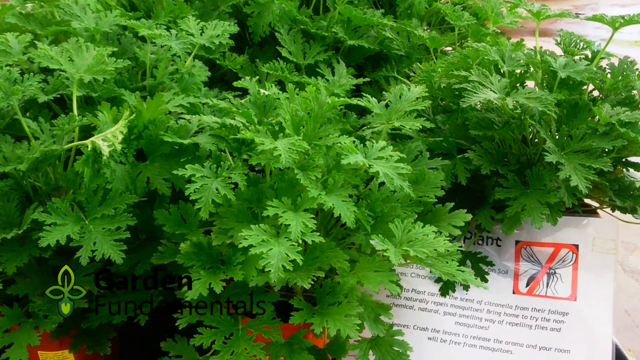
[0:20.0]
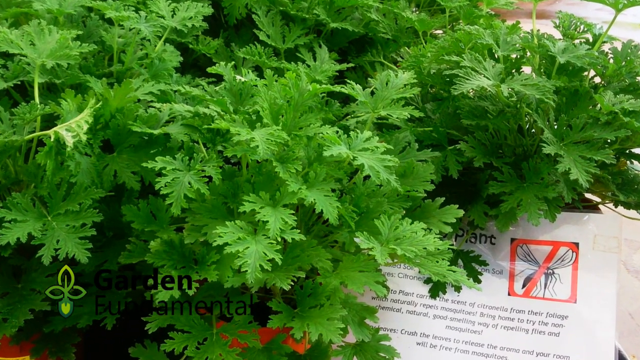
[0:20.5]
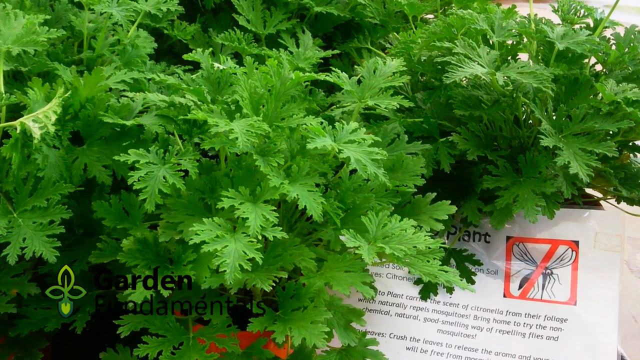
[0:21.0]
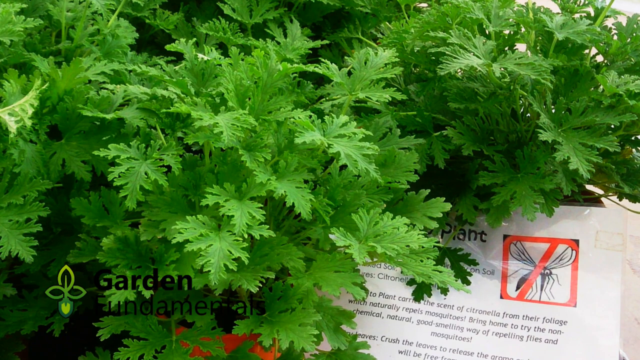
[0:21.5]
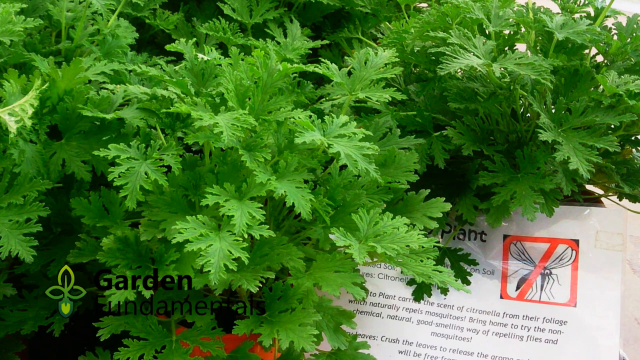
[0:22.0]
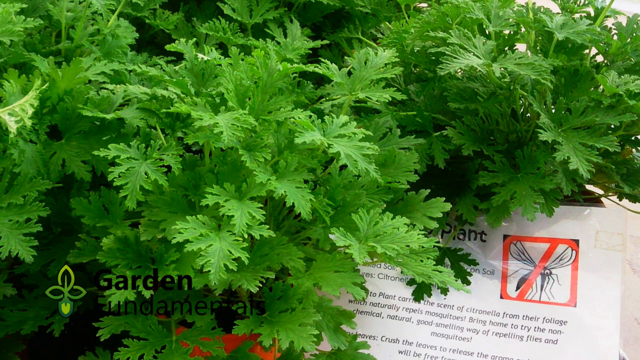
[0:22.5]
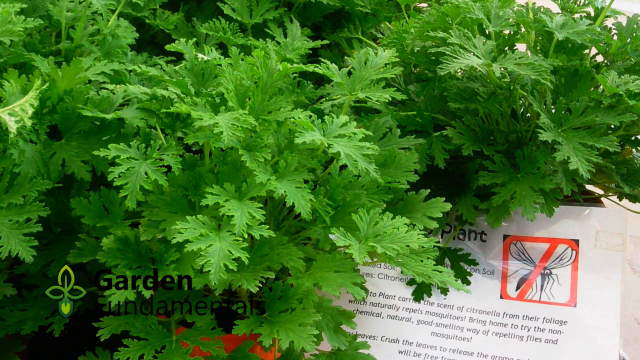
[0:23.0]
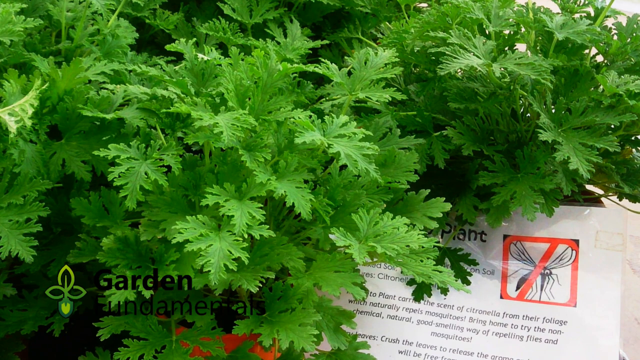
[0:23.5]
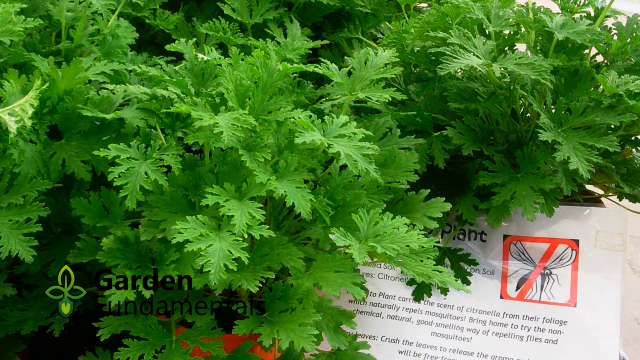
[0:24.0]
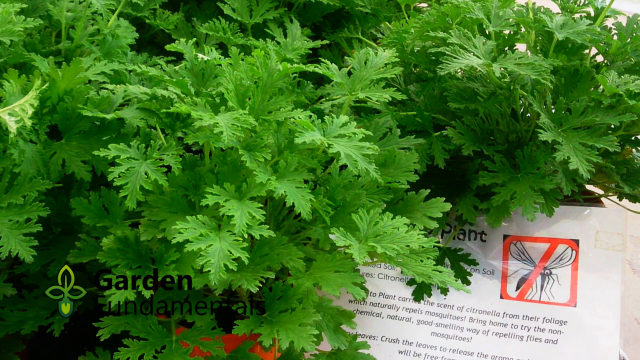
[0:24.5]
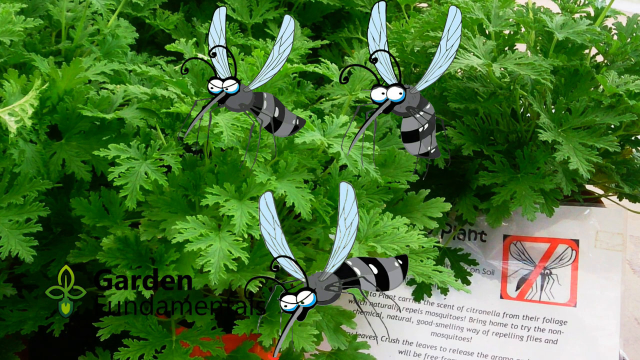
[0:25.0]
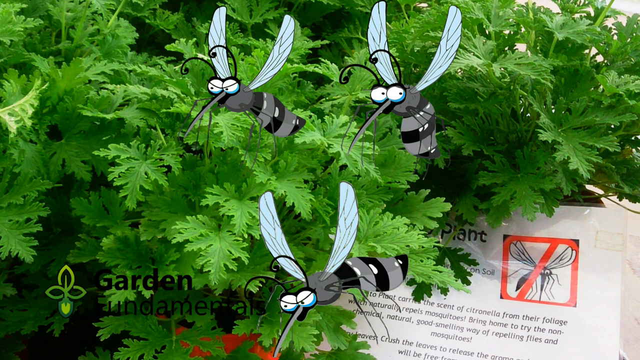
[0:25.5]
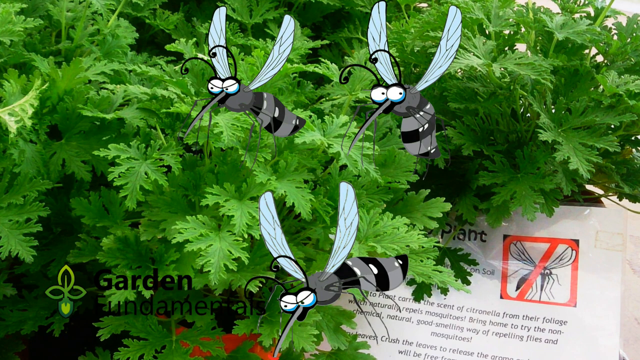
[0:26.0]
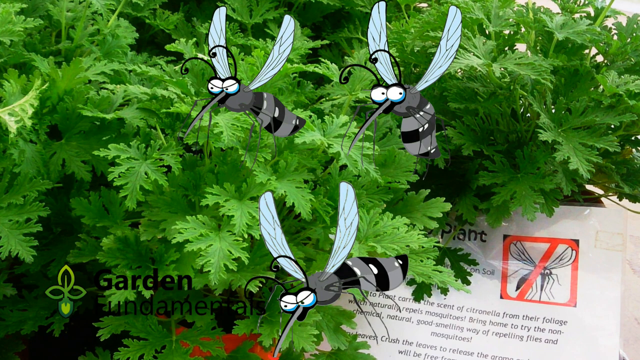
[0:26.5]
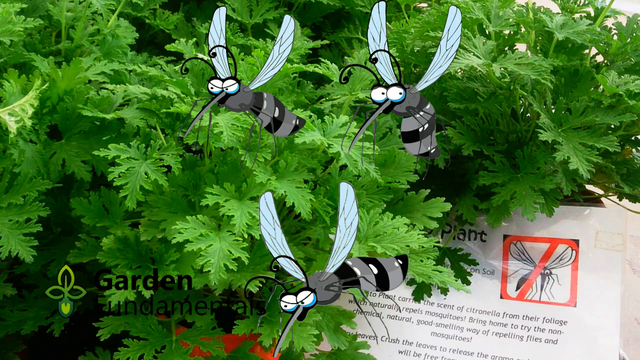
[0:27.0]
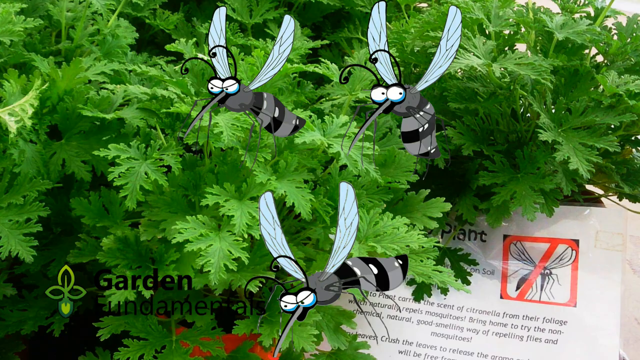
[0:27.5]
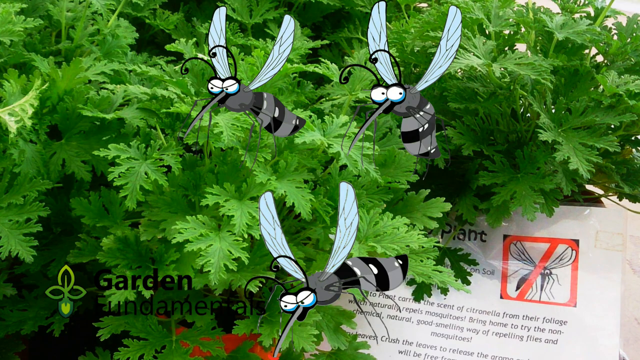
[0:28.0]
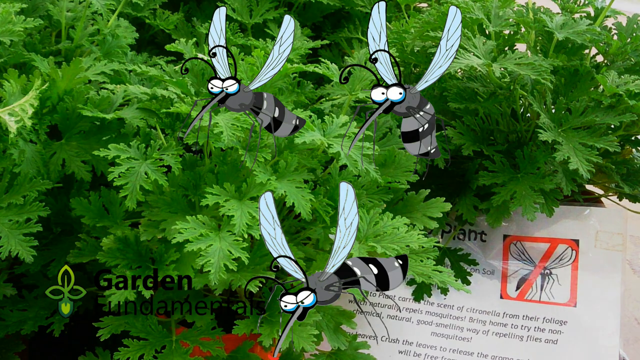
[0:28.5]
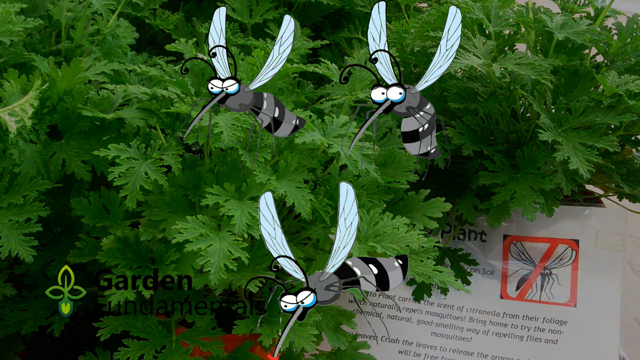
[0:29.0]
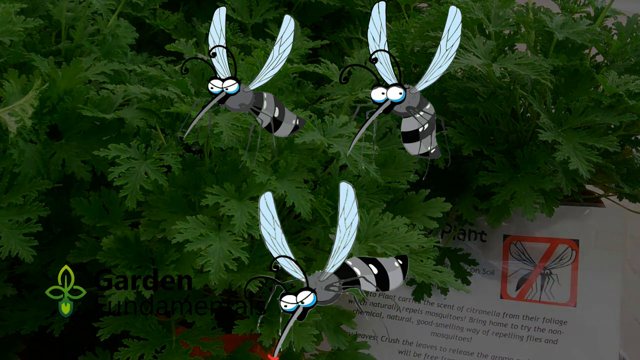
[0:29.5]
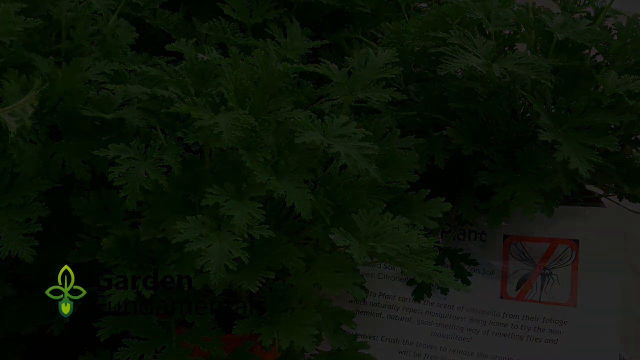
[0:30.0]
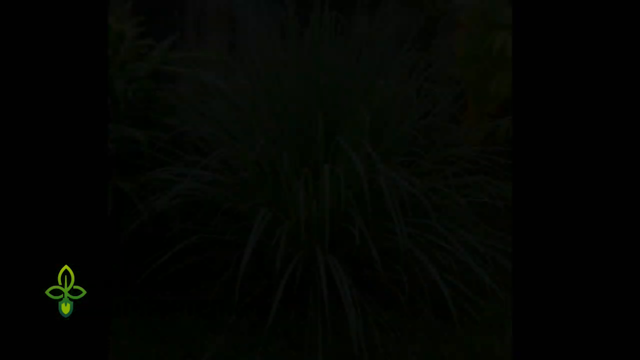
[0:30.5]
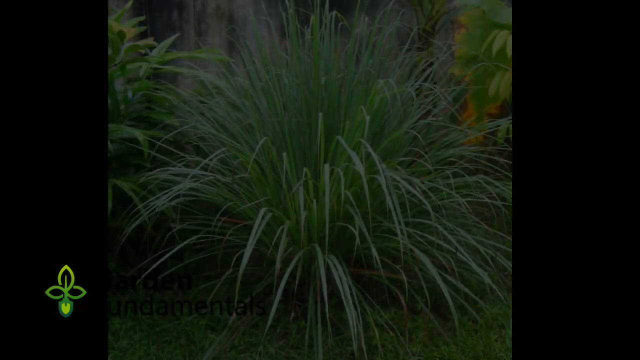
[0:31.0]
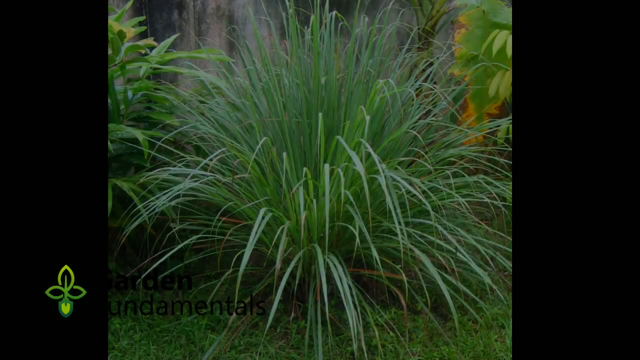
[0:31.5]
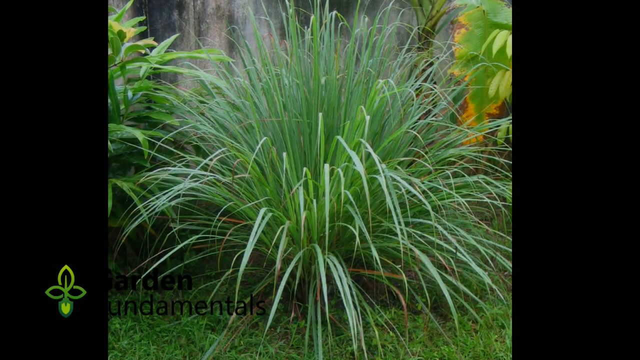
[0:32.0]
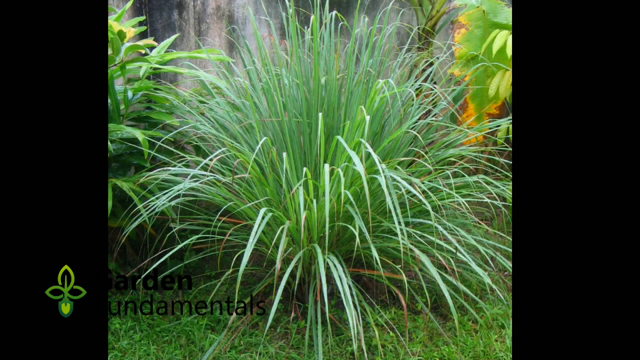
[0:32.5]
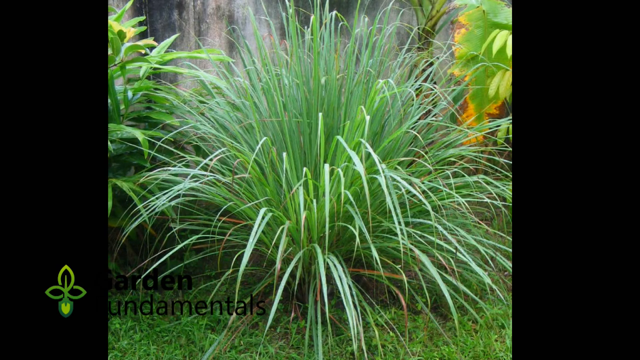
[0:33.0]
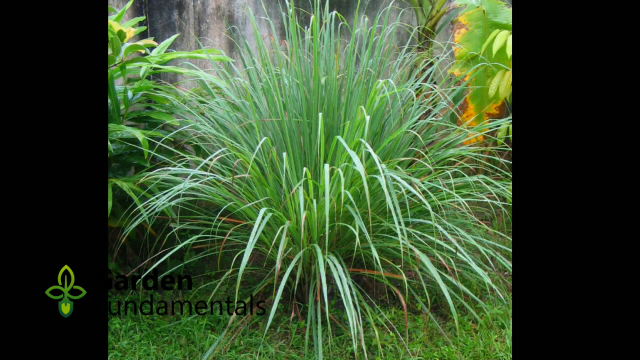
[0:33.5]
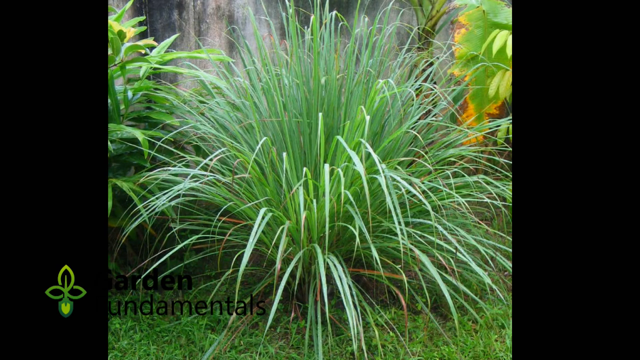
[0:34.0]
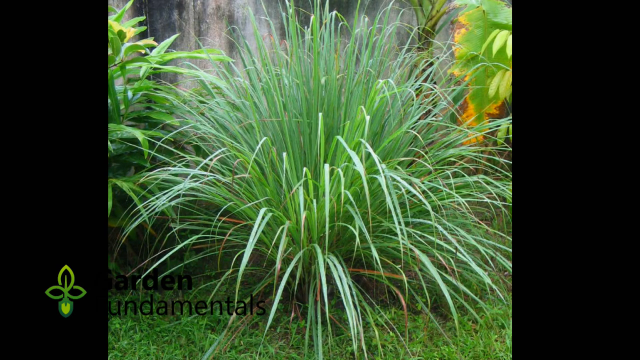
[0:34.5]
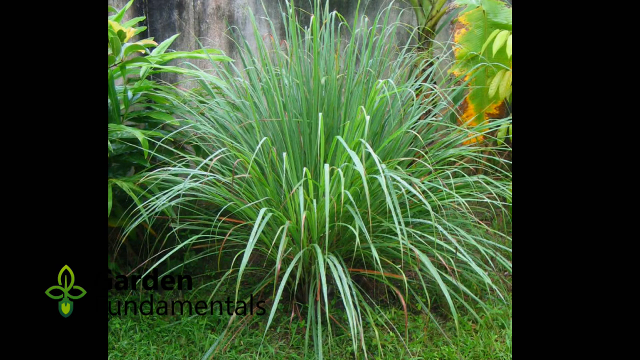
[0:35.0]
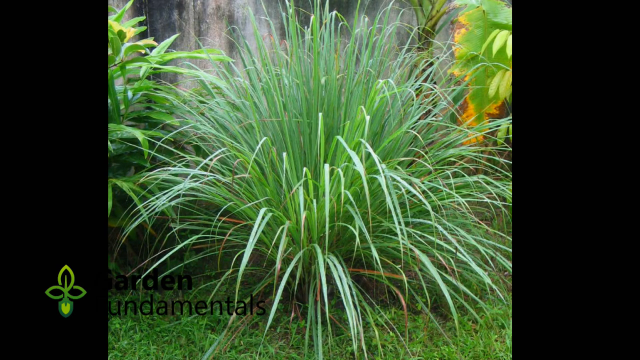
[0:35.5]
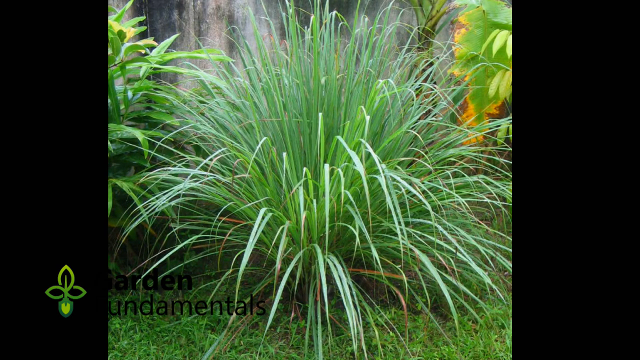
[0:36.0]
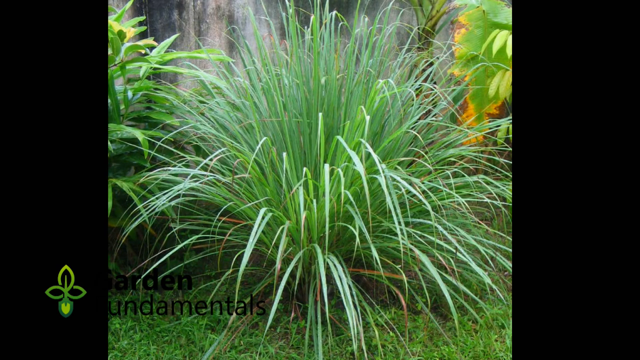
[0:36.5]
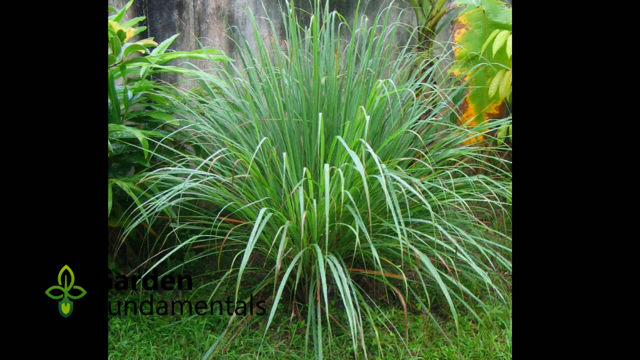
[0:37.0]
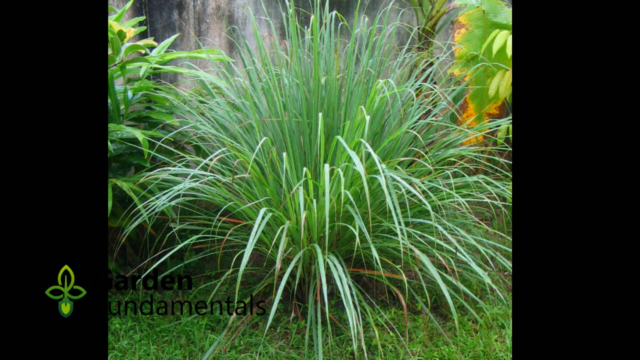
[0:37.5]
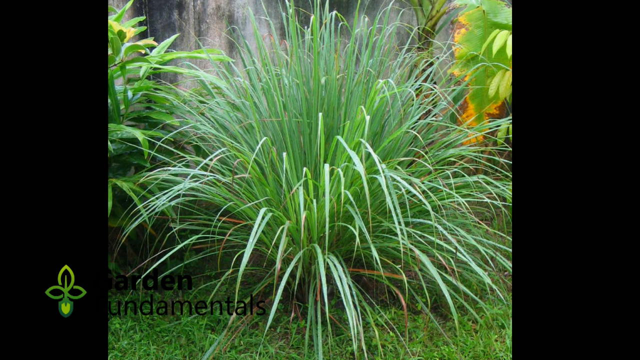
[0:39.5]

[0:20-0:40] There is a bunch of citronella, with tons of it on the corner. A piece of paper shows a picture of a cartoon mosquito crossed out with a red square, and the camera zooms into it until the crossed-out mosquito is clearly visible. A bunch of cartoon mosquitoes then pop up on the screen, sitting above a citronella plant. Everything fades, and a picture appears of a plant that looks more like some sort of grass grown out of the ground, in the center of the screen, with other greenery in the background. Another picture of it follows, with other green plants around it.